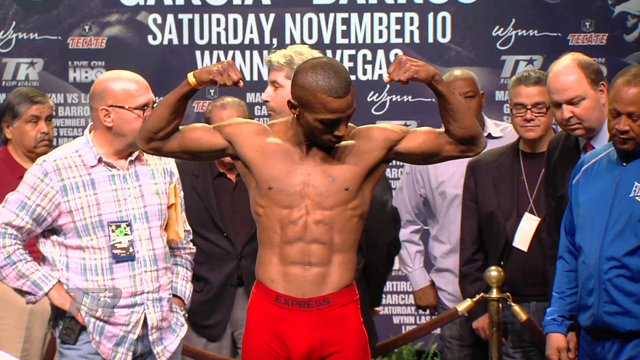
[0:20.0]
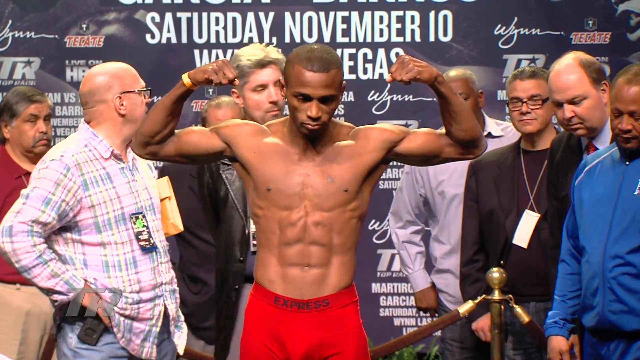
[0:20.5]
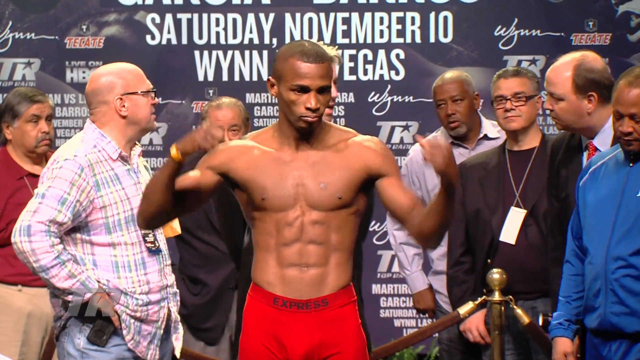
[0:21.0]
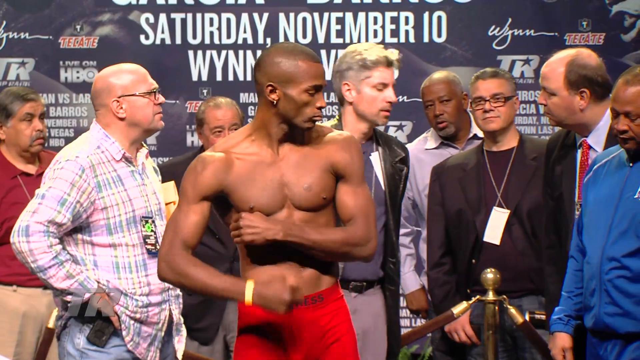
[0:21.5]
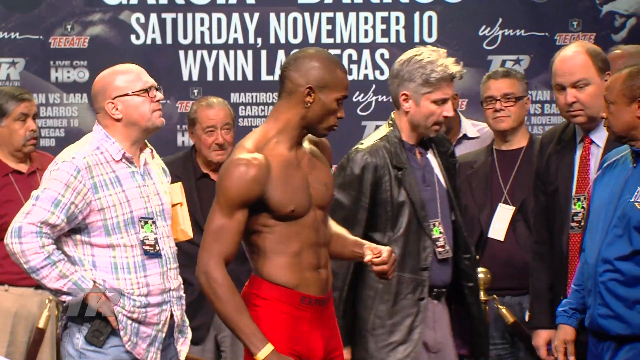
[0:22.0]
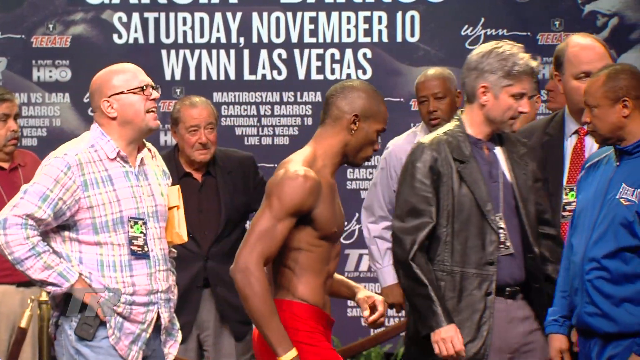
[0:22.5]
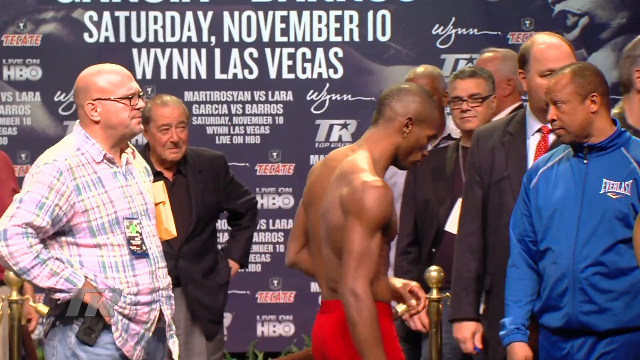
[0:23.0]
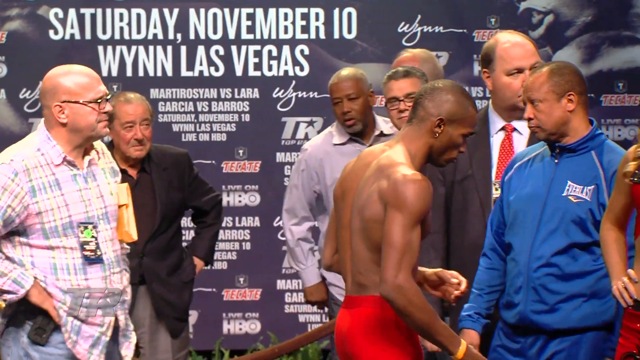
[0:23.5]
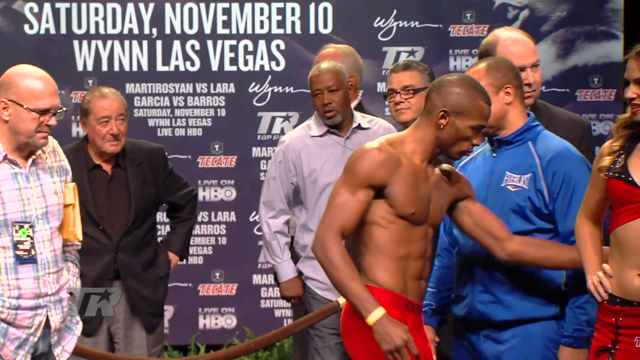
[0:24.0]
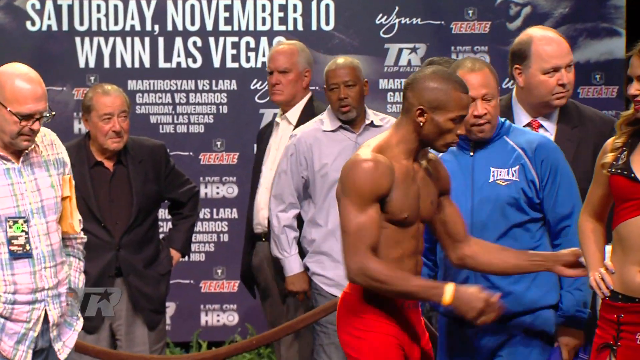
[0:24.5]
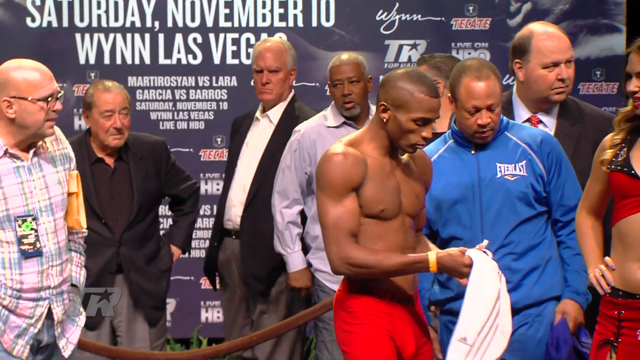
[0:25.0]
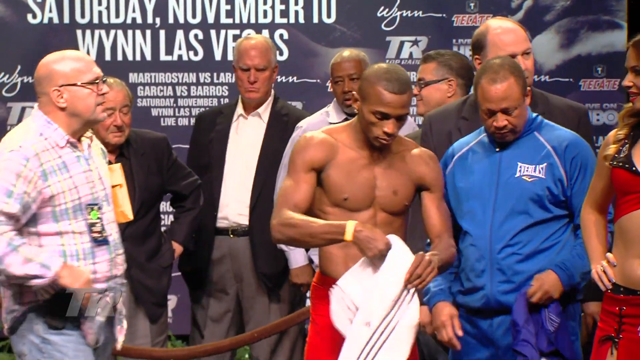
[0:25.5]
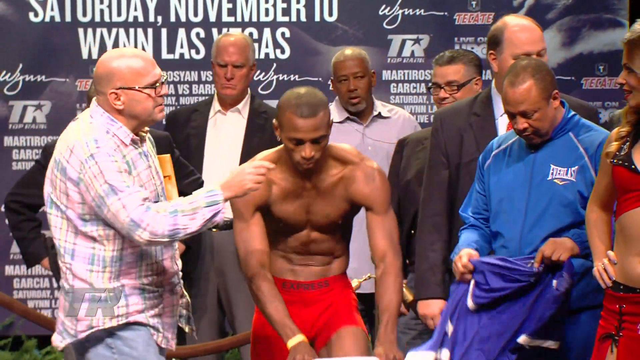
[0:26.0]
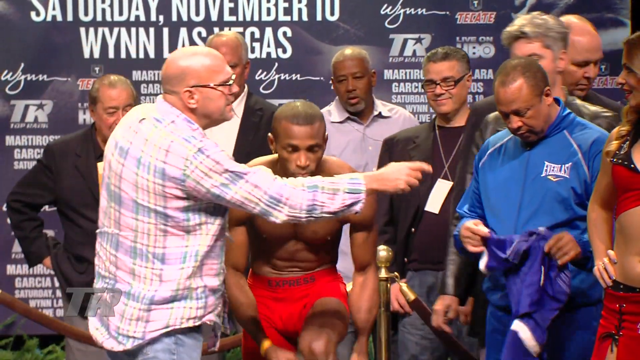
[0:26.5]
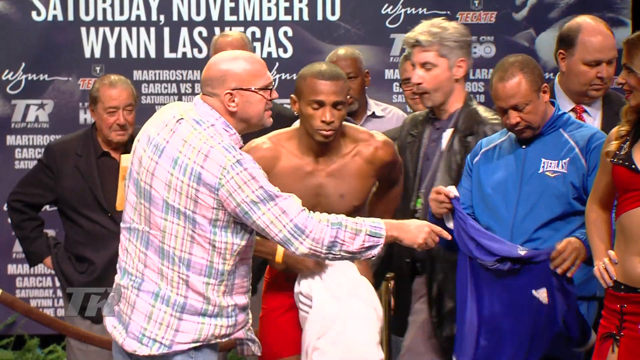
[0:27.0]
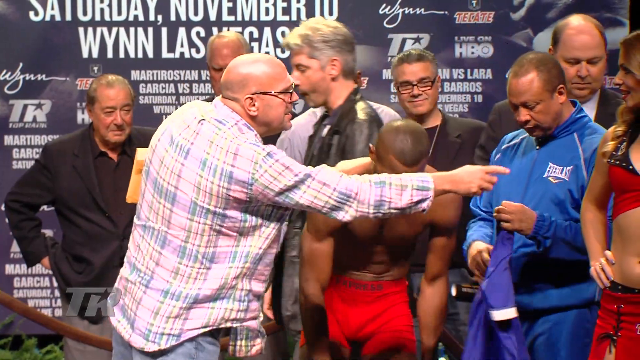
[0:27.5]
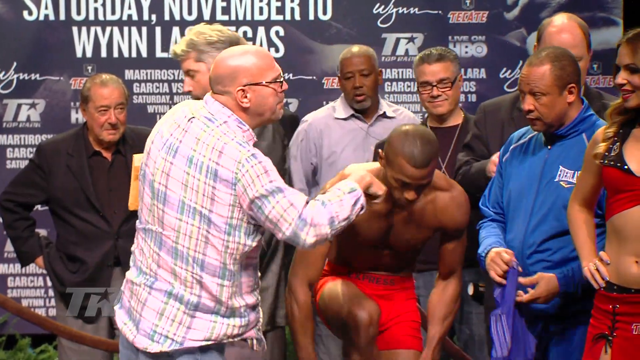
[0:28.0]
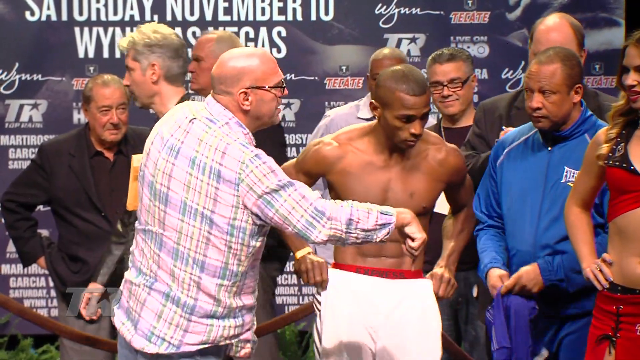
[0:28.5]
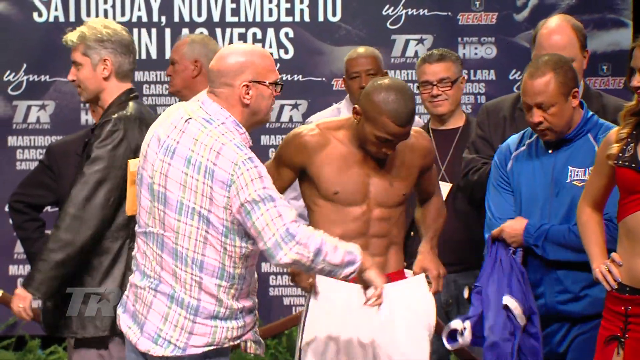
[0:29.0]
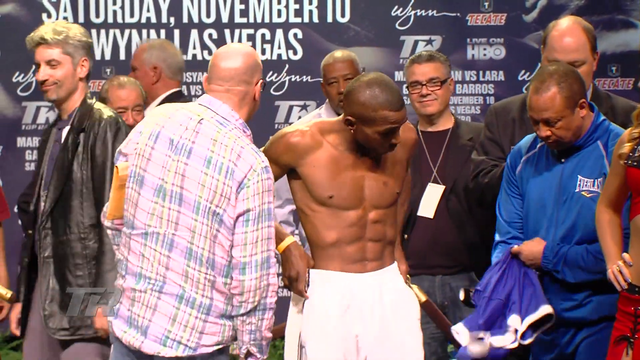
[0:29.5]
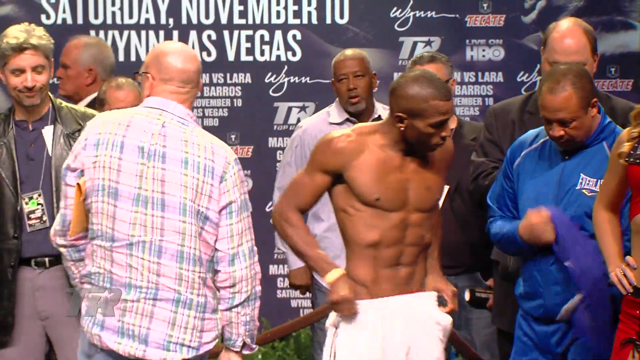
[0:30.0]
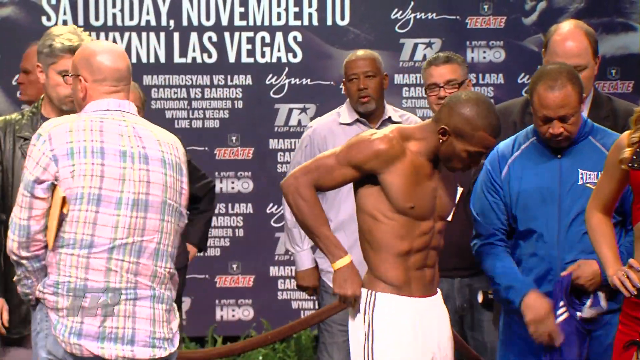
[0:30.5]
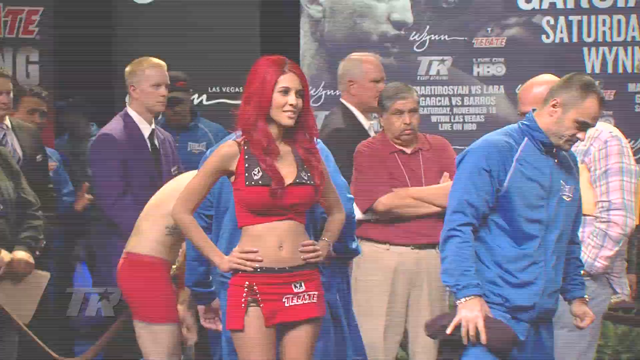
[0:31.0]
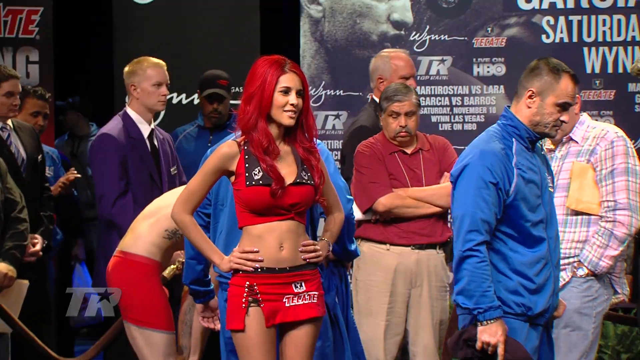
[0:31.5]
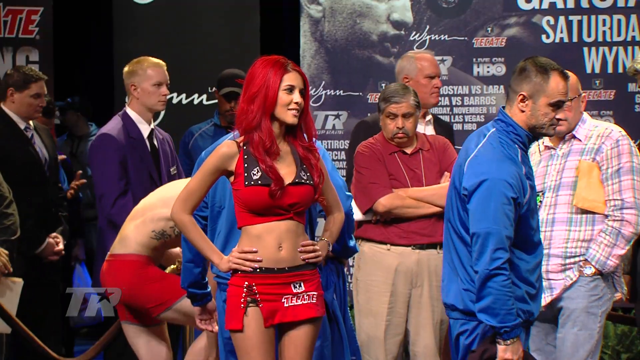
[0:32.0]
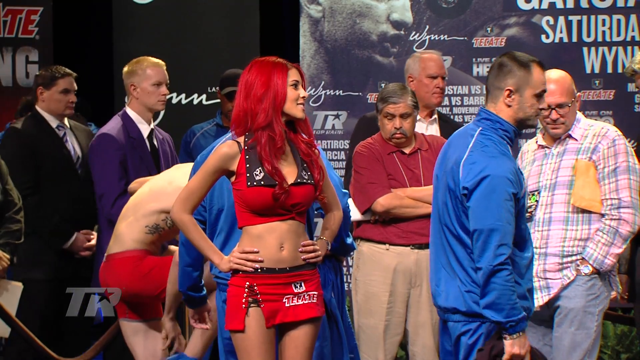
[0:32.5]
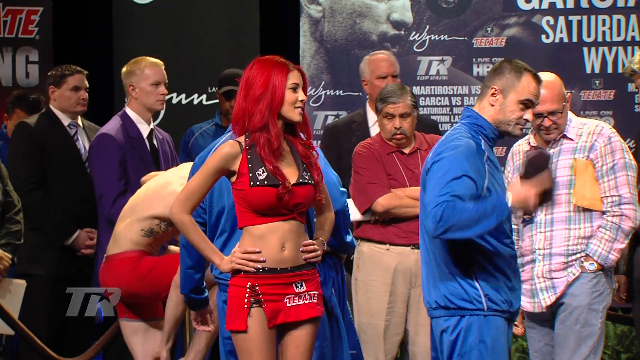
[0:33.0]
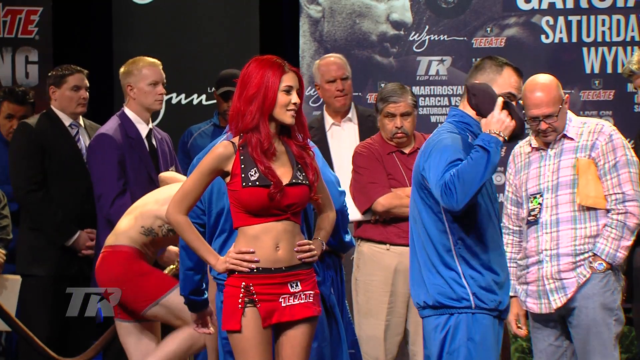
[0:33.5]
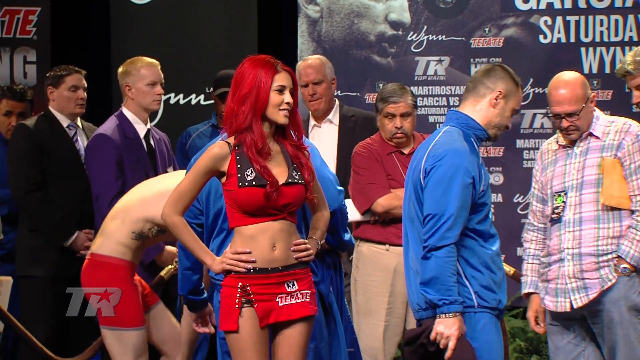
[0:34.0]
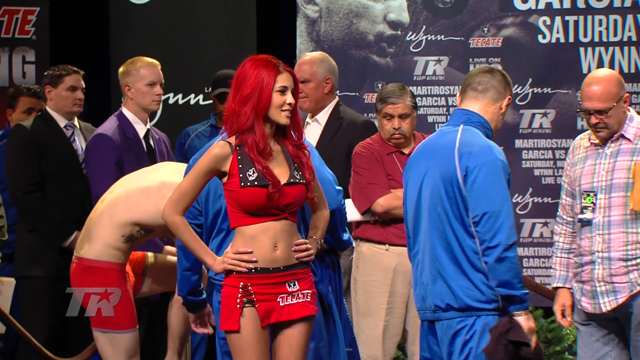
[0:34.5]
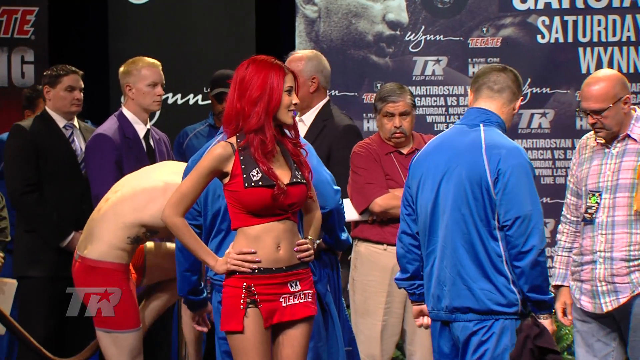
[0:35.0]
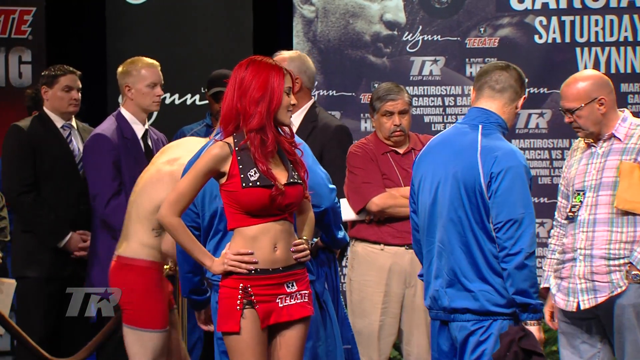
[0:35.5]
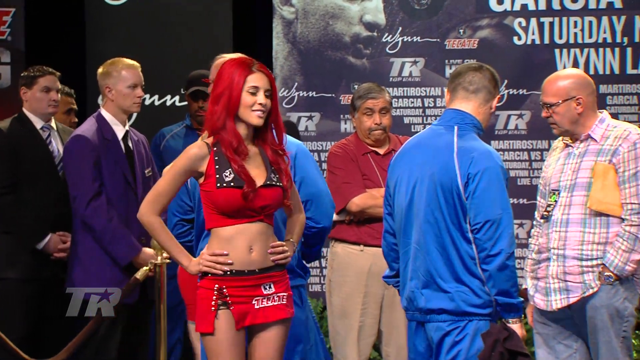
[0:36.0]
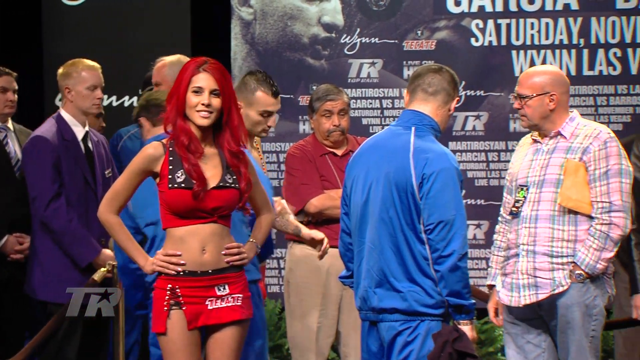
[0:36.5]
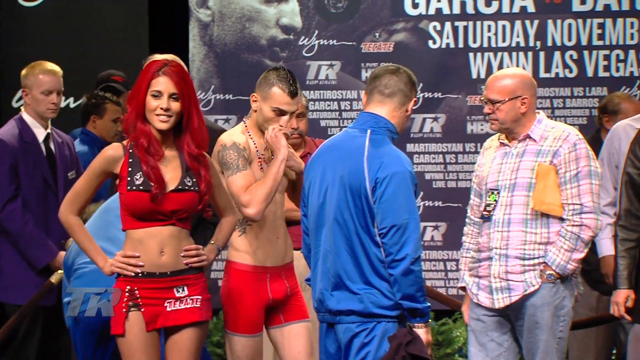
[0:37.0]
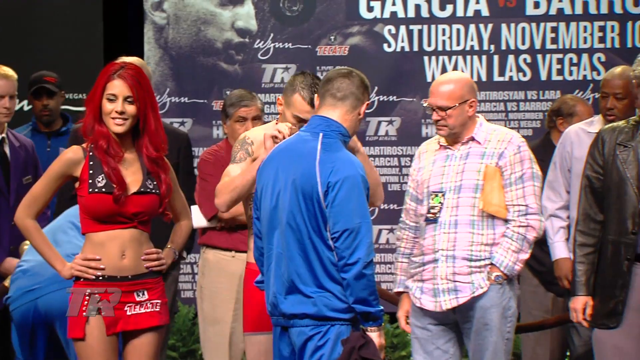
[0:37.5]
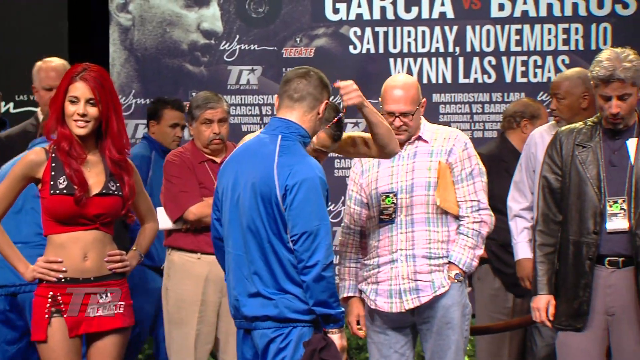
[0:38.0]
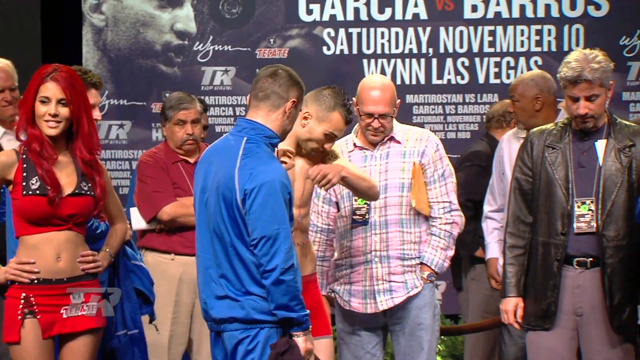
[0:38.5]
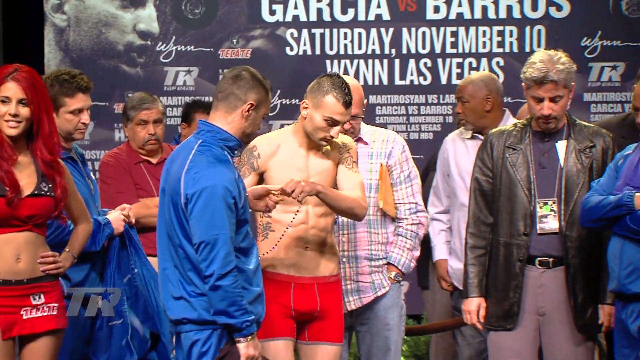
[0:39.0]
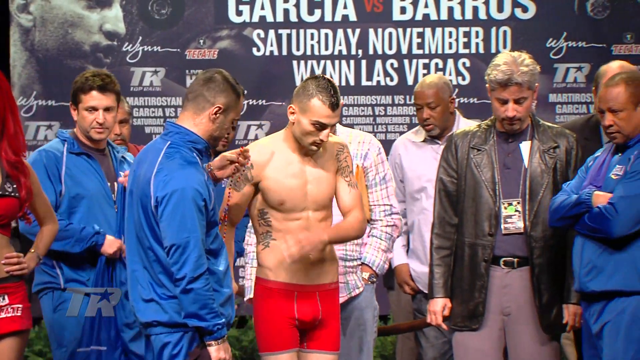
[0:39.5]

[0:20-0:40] After the flex, the fighter lowers his arms, gets back down, looks to his left, and puts on white pants while his trainer in a blue shirt hands him another shirt. The view switches to the other end, where the other fighter stands with another showgirl, also holding her hip, a trainer also dressed all in blue, and a group of men in suits. Before getting onto the platform, this fighter takes off a bead necklace and hands it to the blue-shirted trainer. When the first fighter gets off, he follows a man wearing a black leather jacket over a dark blue shirt. The first fighter has a dark skin tone, while the second fighter has a more Caucasian skin tone. The man in the black leather jacket walks back to the middle and looks like he is talking to the main referee or whoever is running this photo exposition. The first showgirl has slightly curly blonde hair; the second has dyed scarlet red hair.